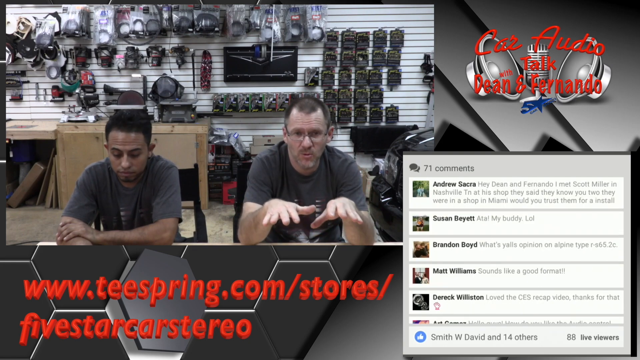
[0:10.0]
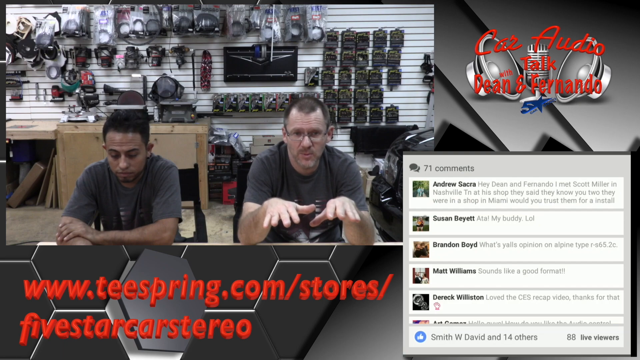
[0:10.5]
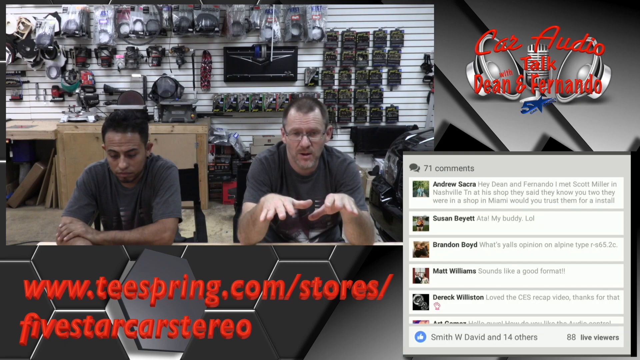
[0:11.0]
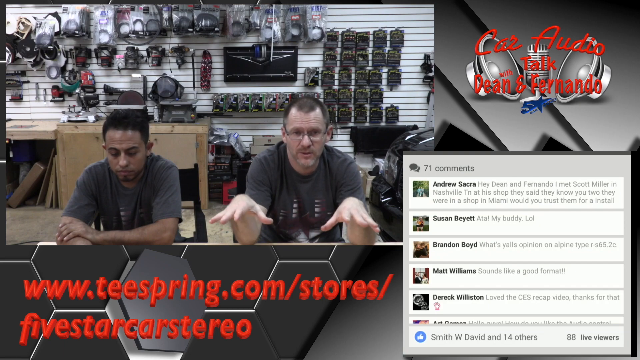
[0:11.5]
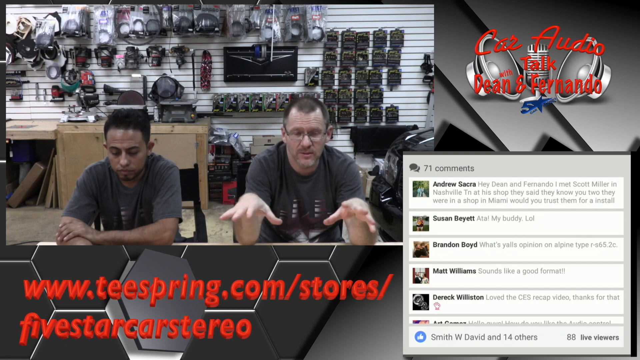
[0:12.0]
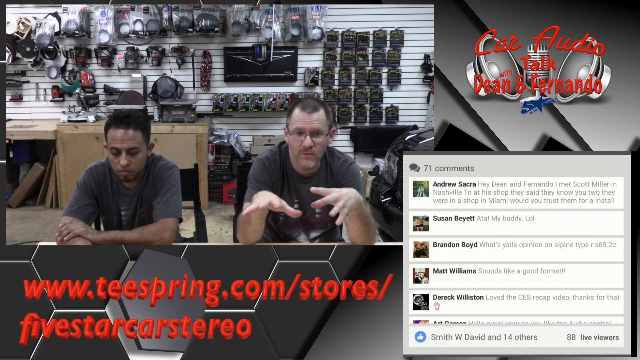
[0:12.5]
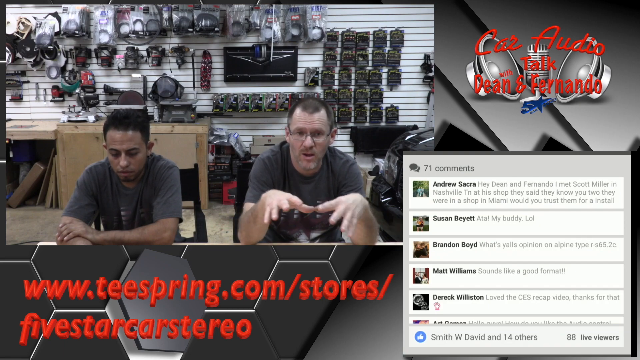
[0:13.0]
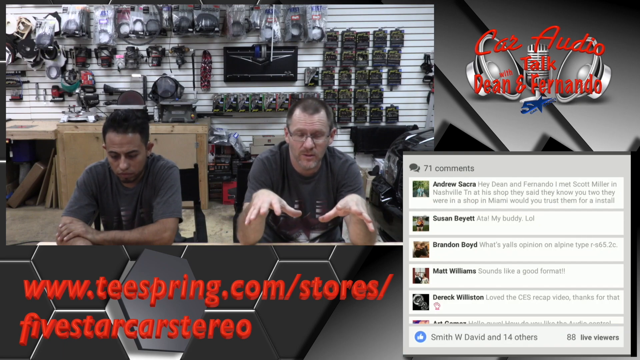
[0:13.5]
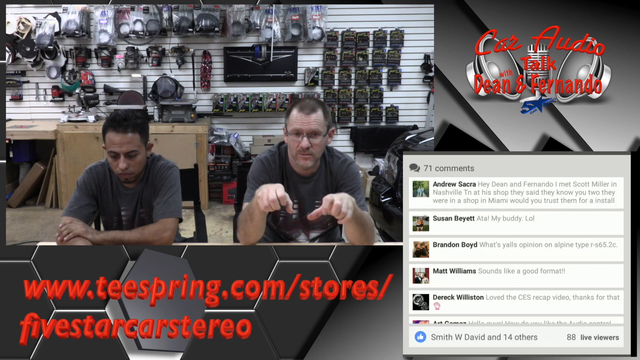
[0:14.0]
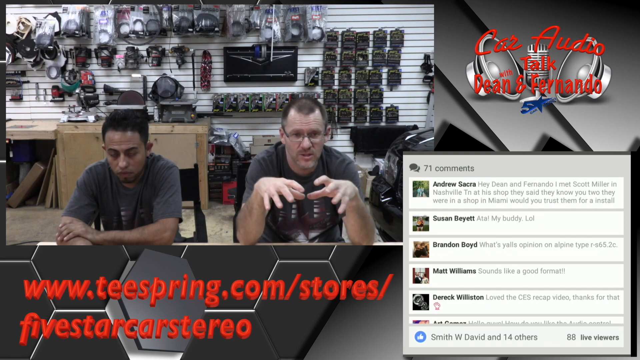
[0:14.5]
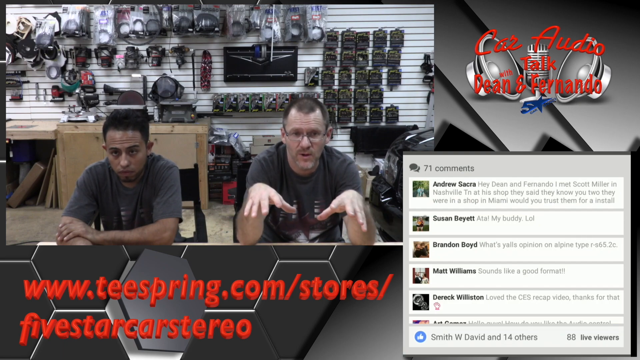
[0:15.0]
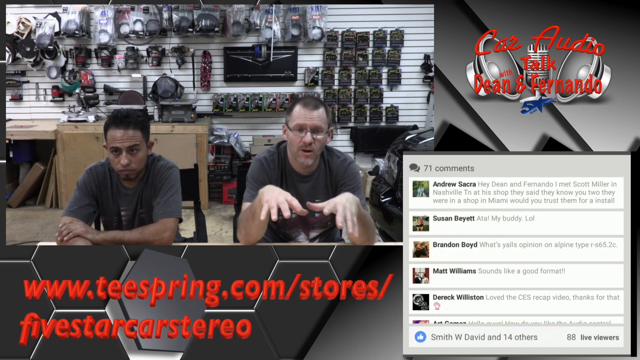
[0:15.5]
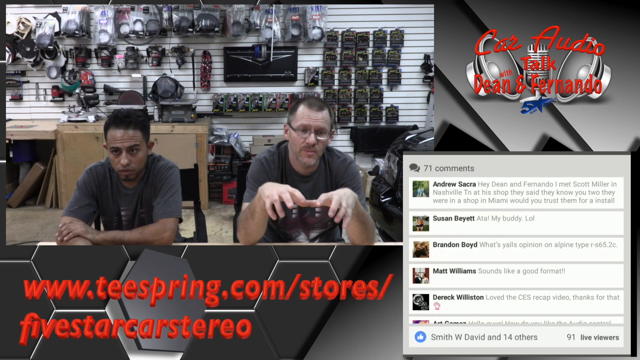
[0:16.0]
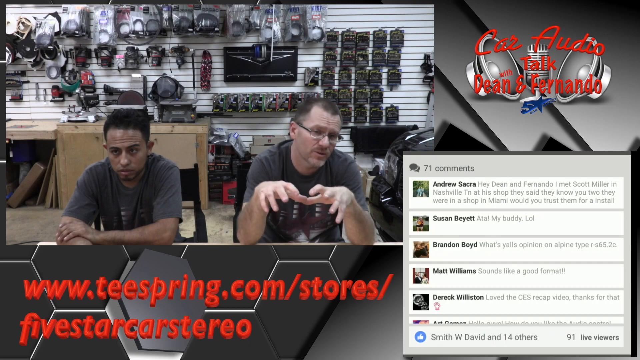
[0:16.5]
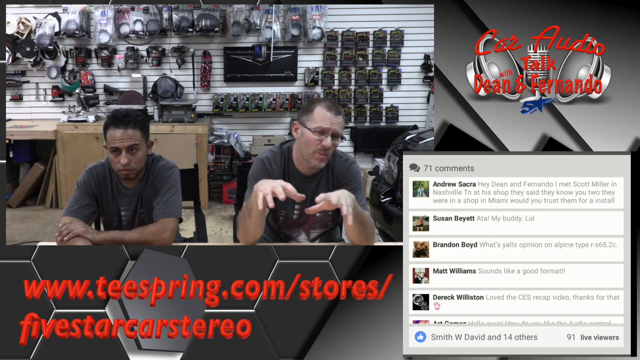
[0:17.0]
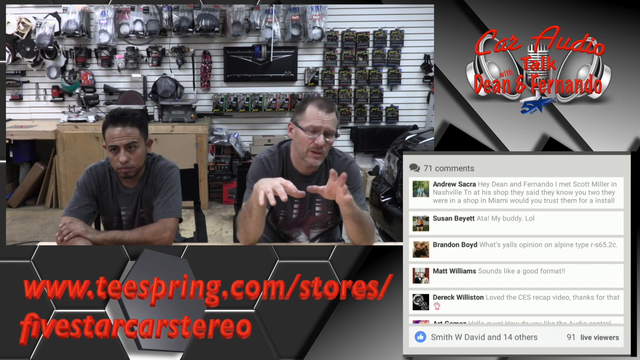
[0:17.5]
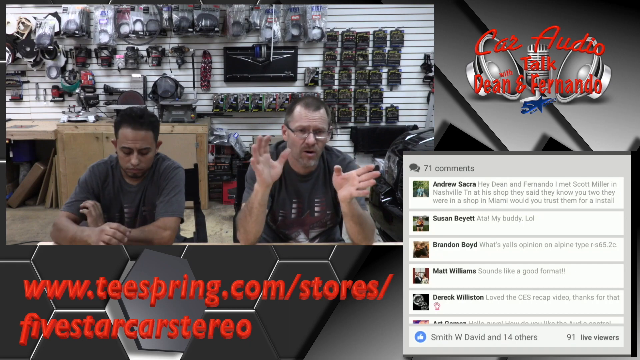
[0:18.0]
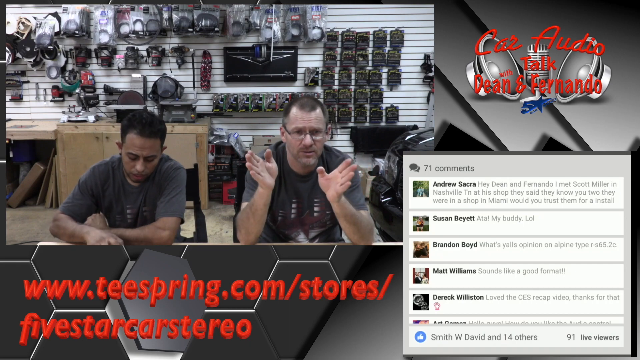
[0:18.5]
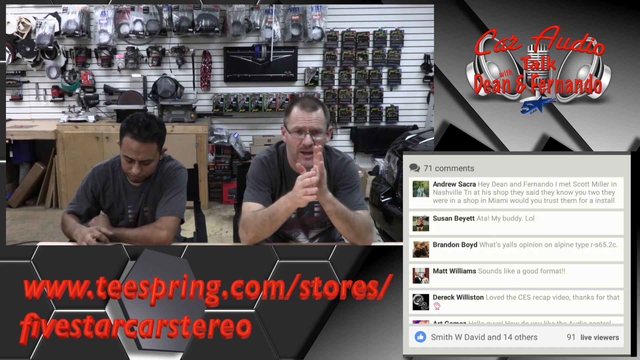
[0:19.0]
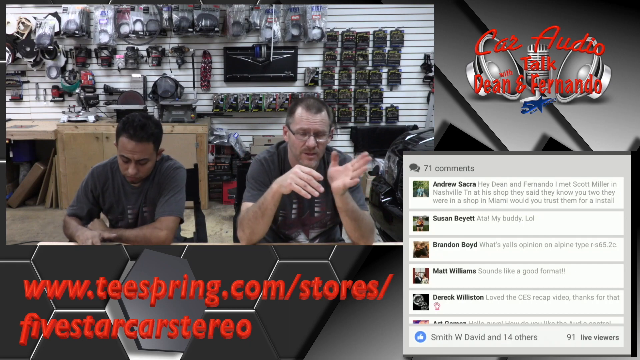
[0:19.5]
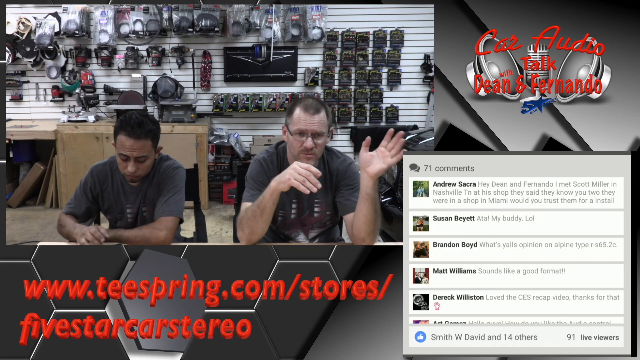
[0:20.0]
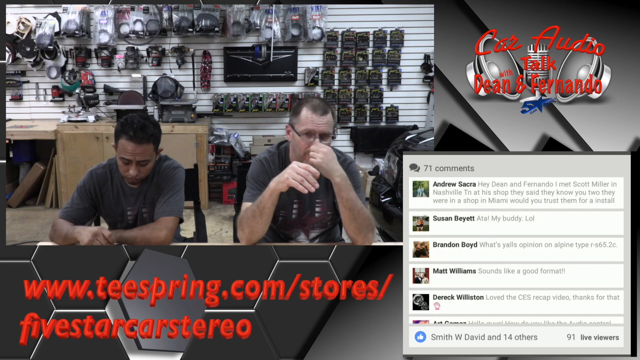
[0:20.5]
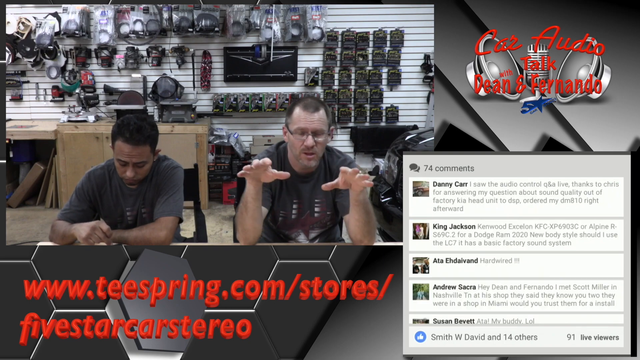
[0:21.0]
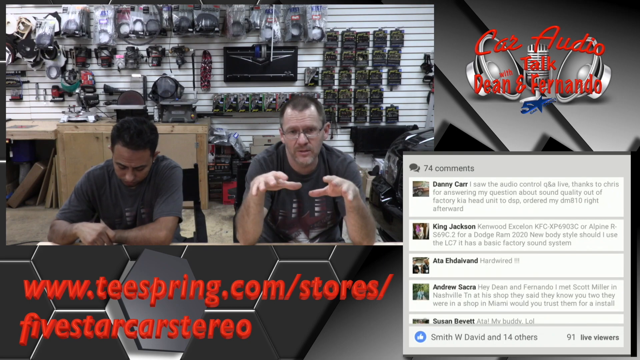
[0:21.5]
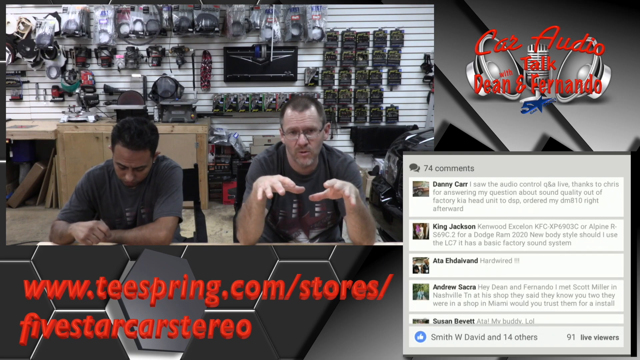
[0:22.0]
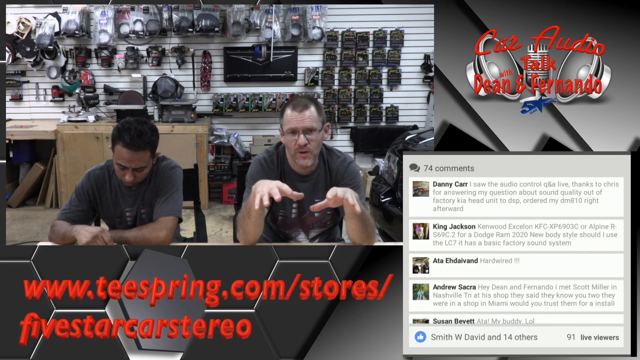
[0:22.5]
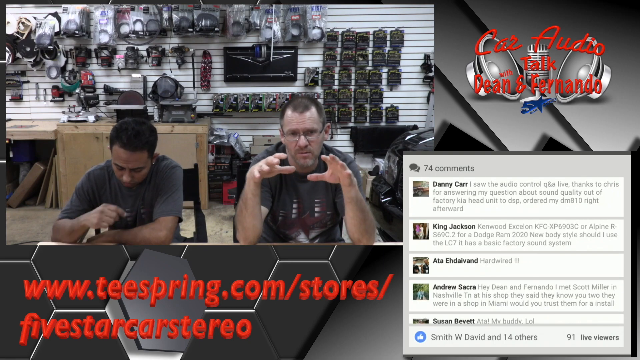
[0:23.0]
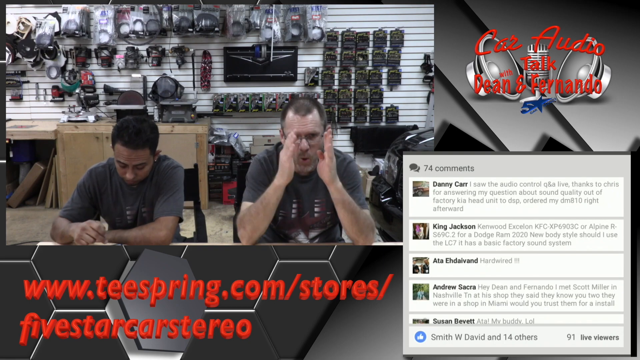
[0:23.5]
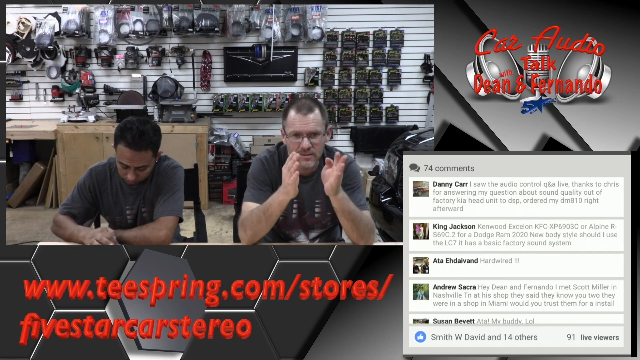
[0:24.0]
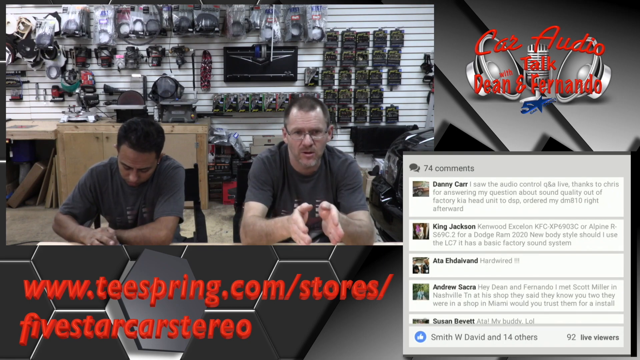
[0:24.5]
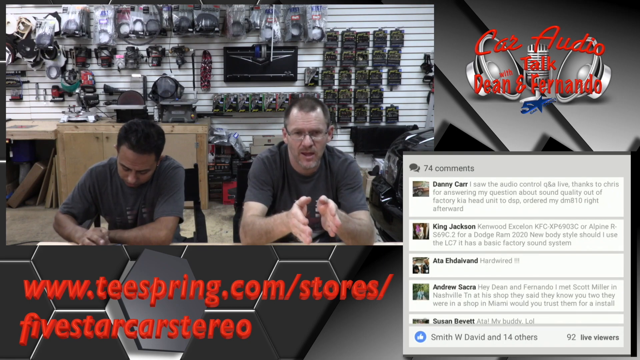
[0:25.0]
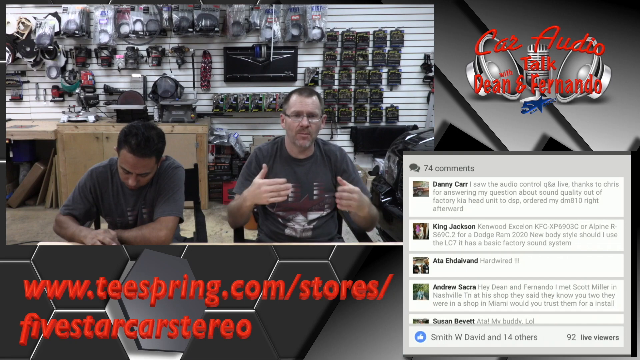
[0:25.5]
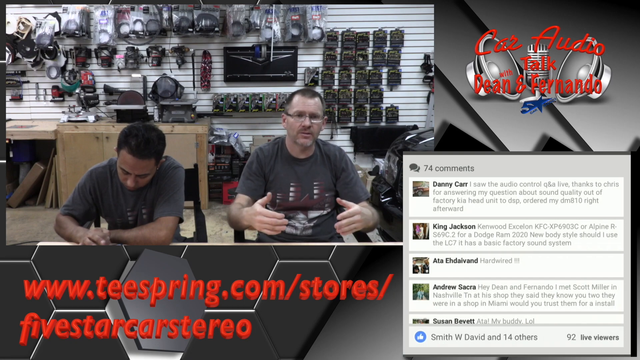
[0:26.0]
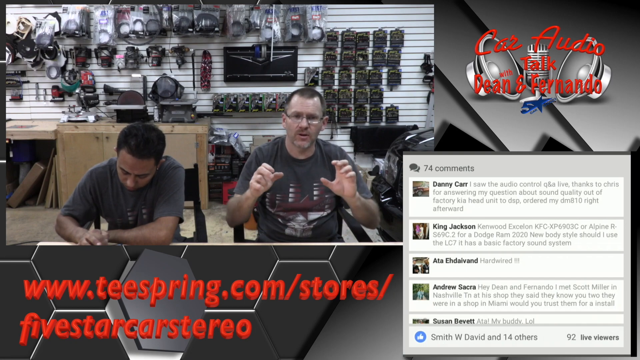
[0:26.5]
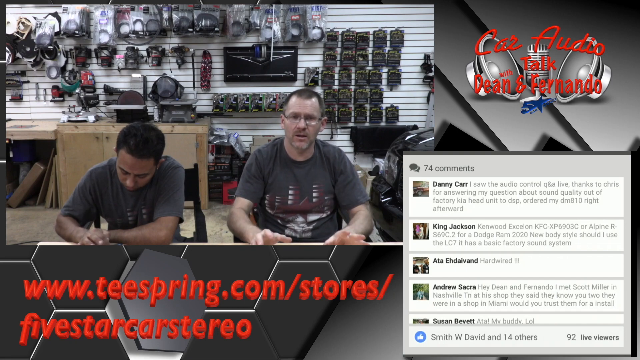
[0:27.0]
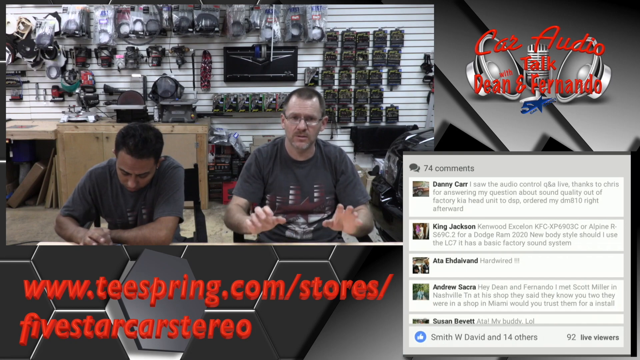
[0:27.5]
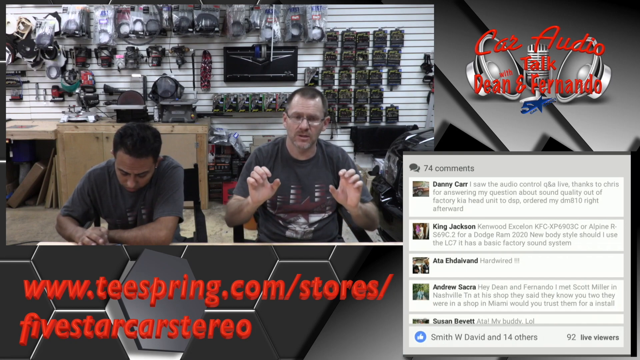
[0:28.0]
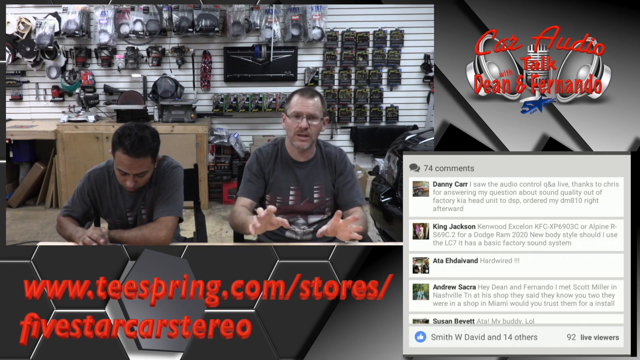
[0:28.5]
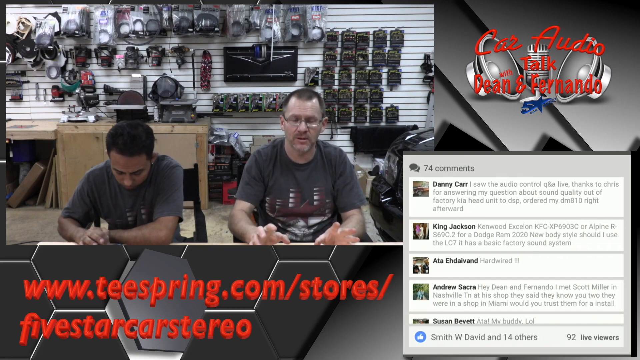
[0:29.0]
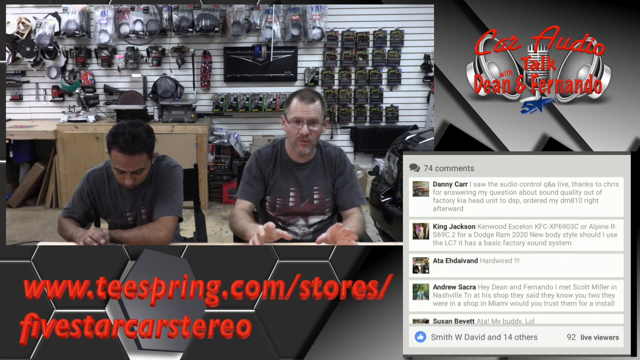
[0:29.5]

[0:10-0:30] The video appears to be some sort of stream. A large rectangle at the top left seems to be the stream's feed, showing two men sitting down and talking toward the camera: apparently a Latino man on the left and a white man on the right. The background looks like a workshop, with a white wall covered in many things hanging off it and a wooden workbench at the bottom left. At the bottom left of the frame, red text reads "www.tspring.com/store/five star car stereo", and at the top right, red text reads "car audio talk with Dean and Fernando". At the bottom right is a rectangular pop-up that appears to hold many white rectangles with text; at its top left, gray text reads "71 comments". In the feed, the Latino man on the left nods and looks up a bit, while the white man on the right keeps talking and waving his hands. The white man rests both elbows on the table and gestures with his palms facing each other, making many more gestures with both hands in front of his chest. The Latino man rests his forearms on the table and seems to look up and down a bit, then appears to look at his phone and scroll up and down, seemingly watching the stream's feed. The comment count at the bottom right then reads 74, and the white man is still talking, raising his arms and gesturing with his elbows on the table.